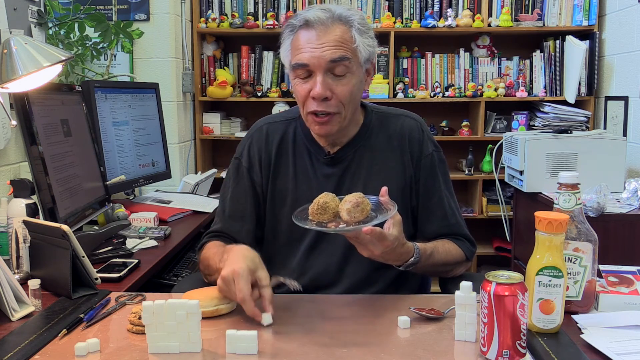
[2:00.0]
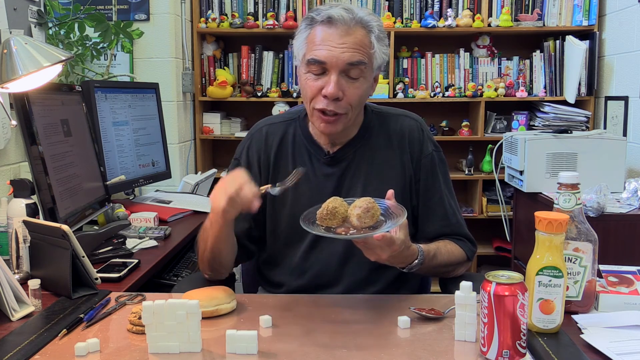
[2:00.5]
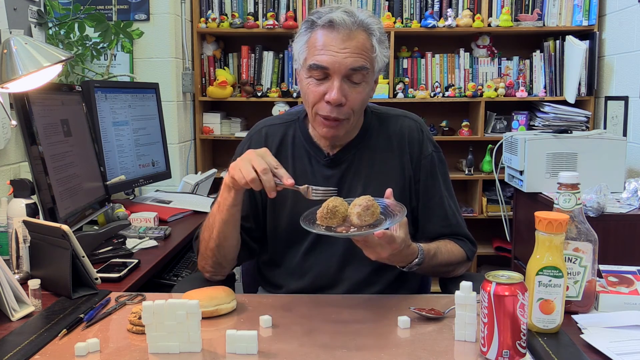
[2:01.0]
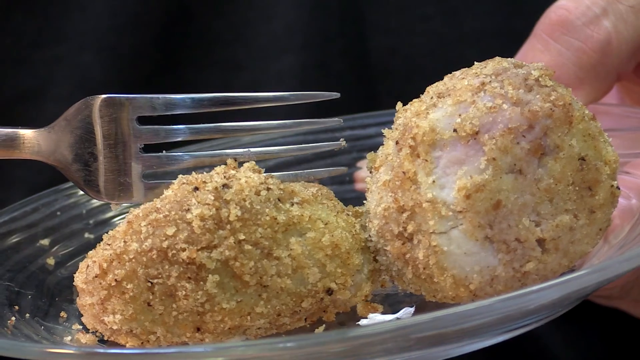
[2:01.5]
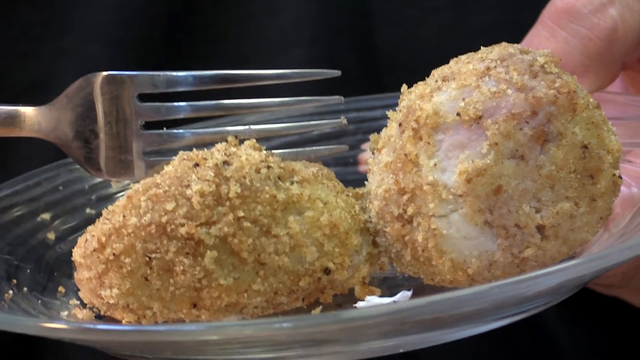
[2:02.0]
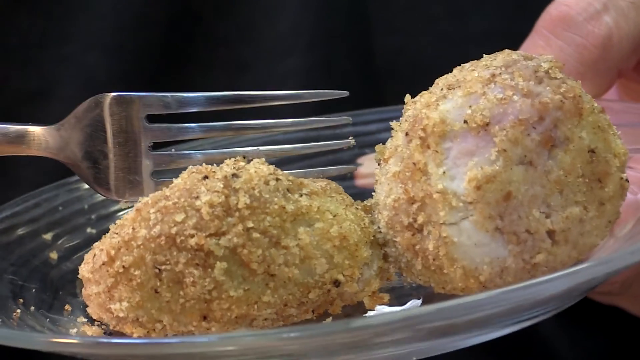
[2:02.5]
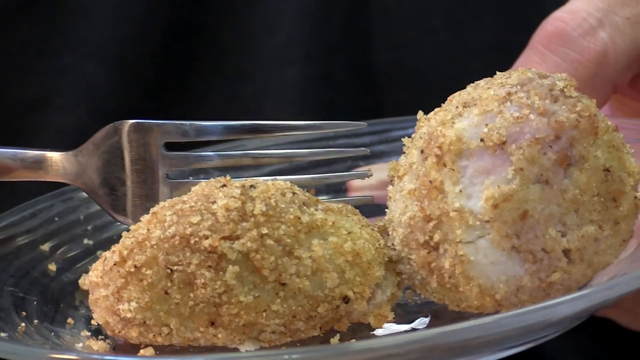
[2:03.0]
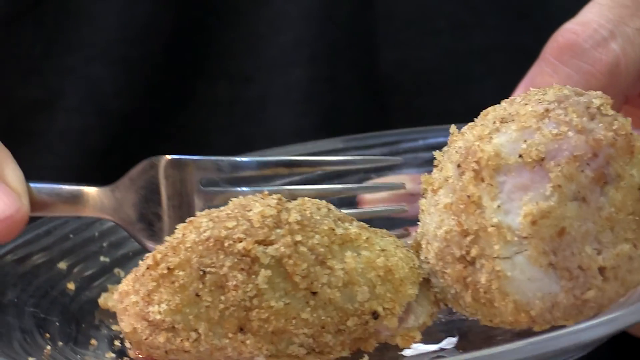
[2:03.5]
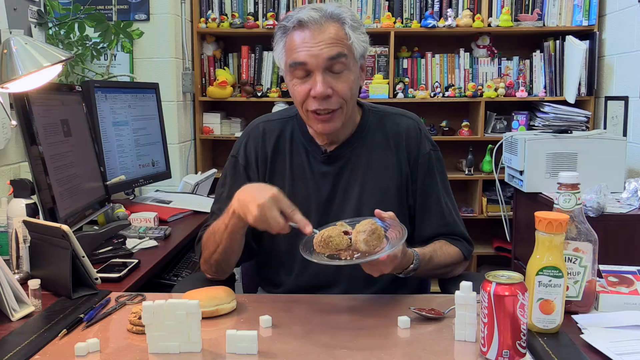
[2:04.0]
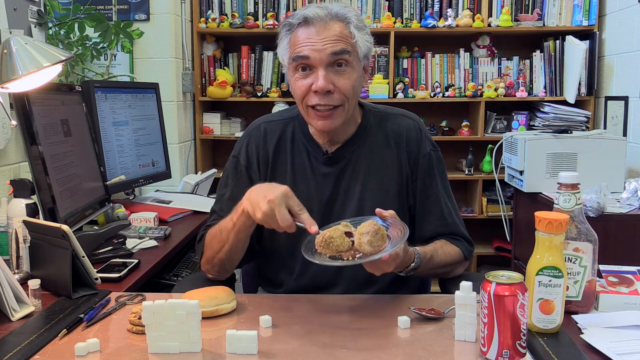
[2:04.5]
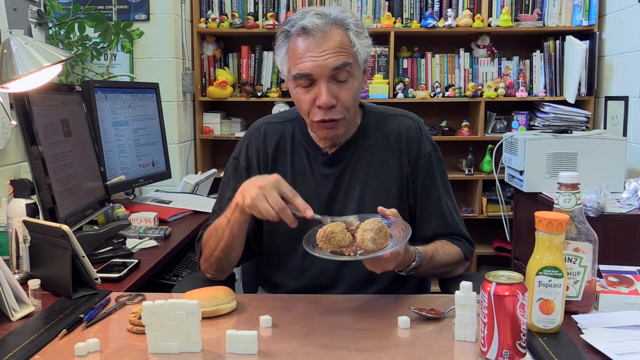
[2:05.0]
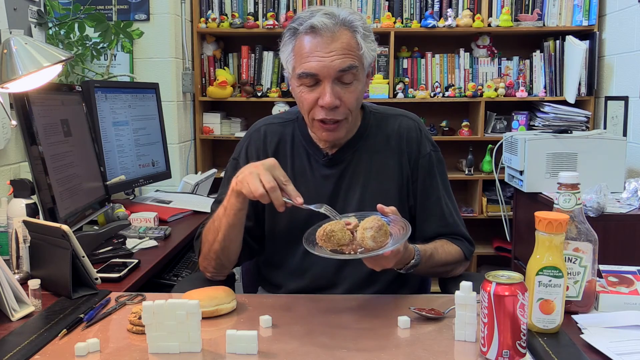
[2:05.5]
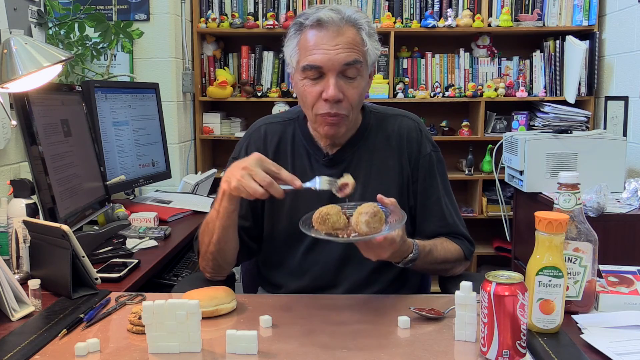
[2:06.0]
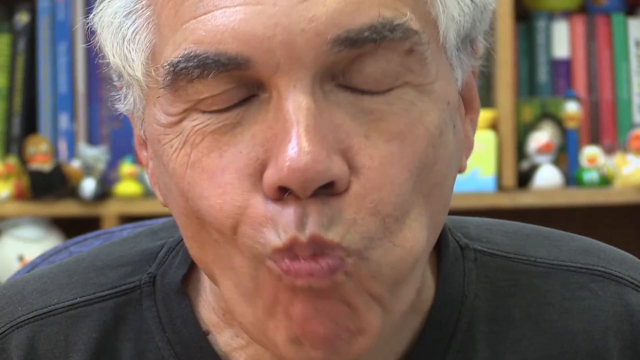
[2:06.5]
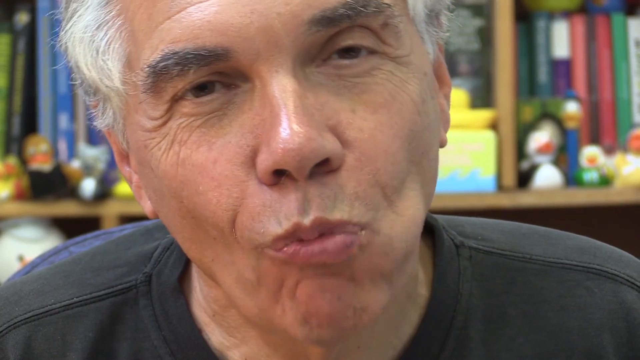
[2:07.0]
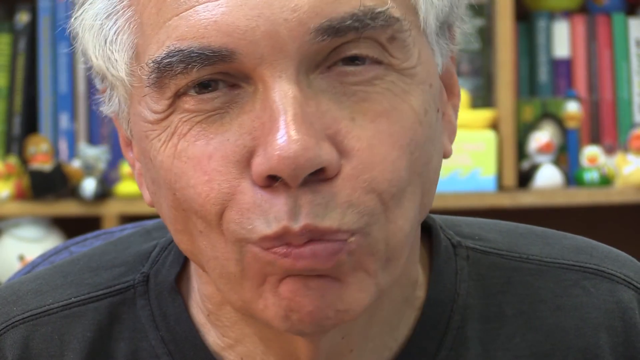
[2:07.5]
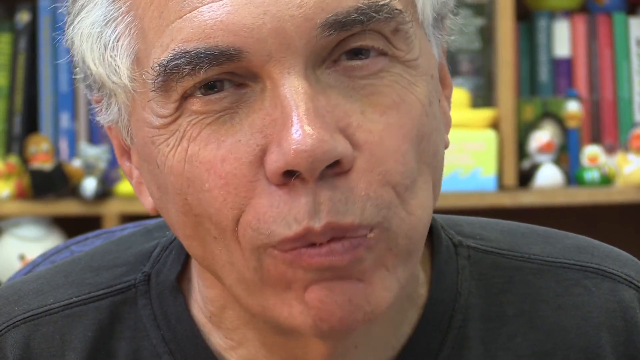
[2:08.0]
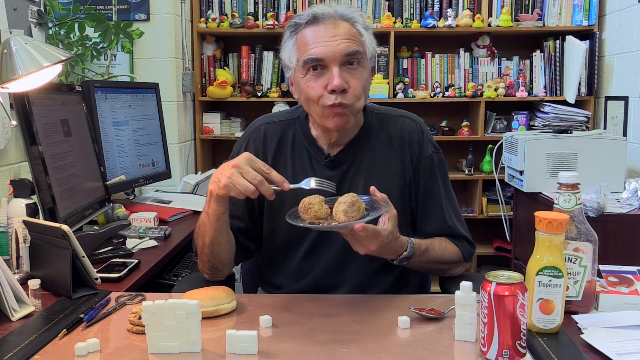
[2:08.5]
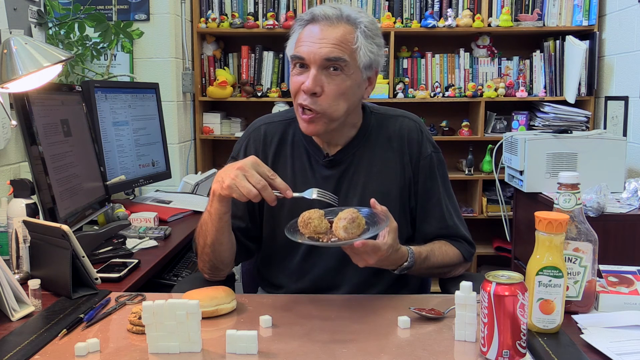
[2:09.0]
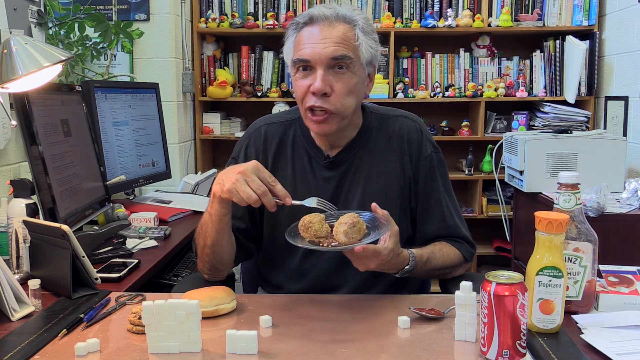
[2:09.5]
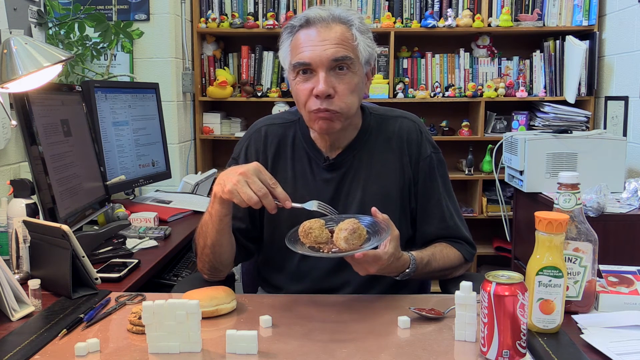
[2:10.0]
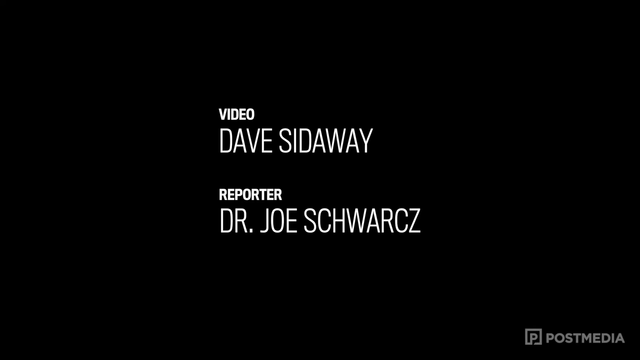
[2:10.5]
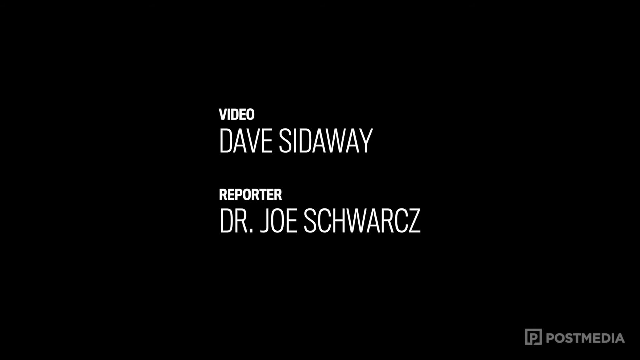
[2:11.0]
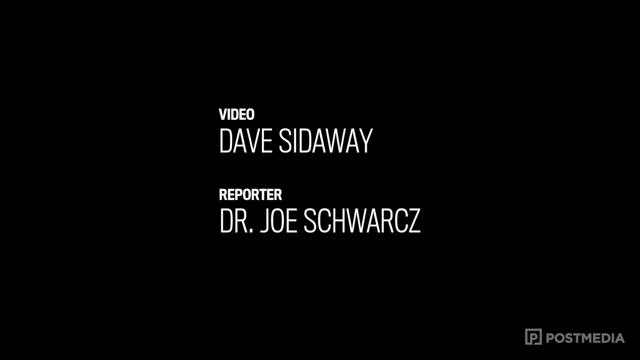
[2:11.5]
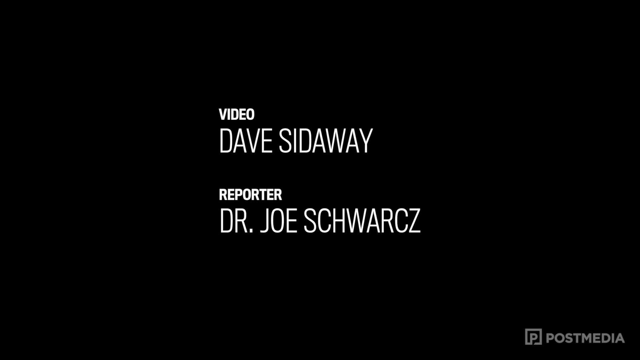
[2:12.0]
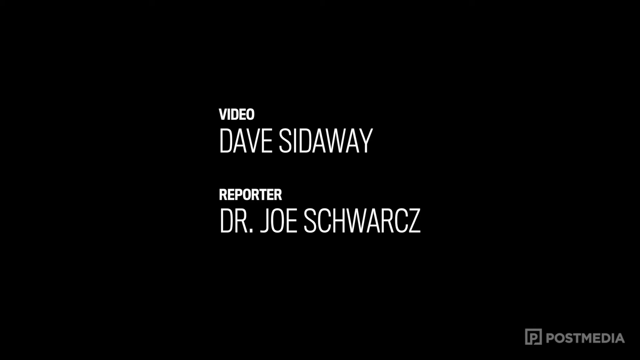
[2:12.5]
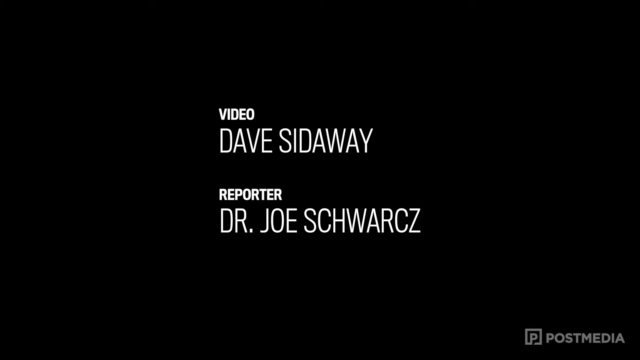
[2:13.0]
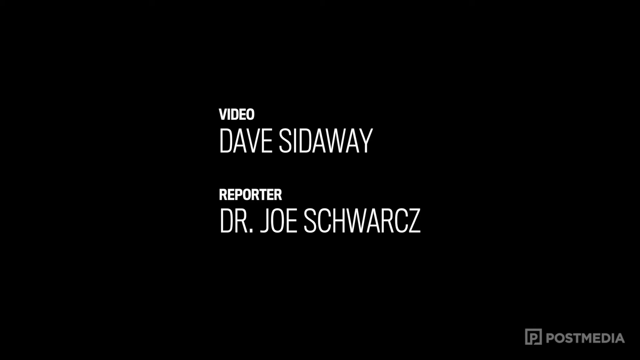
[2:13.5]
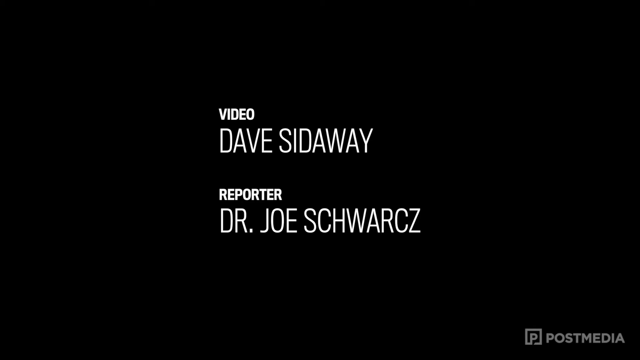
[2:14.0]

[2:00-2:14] The man holds a clear plate with two balls of some type of dessert. His office is a small space, with several yellow duckies on a bookshelf and a green plant in the background. On his left are two computer screens, a tablet on a stand and a phone, and a printer is to his right. In front of him are cubes of sugar, a hamburger bun, a Coca-Cola can, cookies, a spoonful of some type of chocolate mousse, an orange juice bottle and a Heinz bottle. The man lifts a fork to the dessert on his plate and cuts it in half. A close-up shows him eating and shaking his head as if it is very good. Credits appear at the end, crediting the video and the reporter.